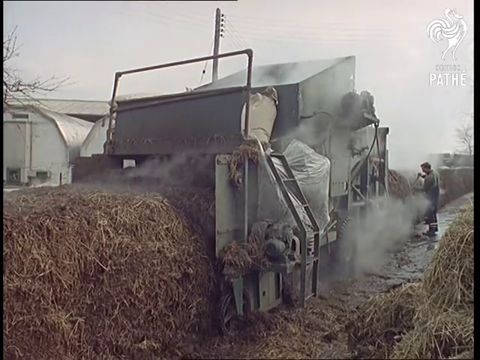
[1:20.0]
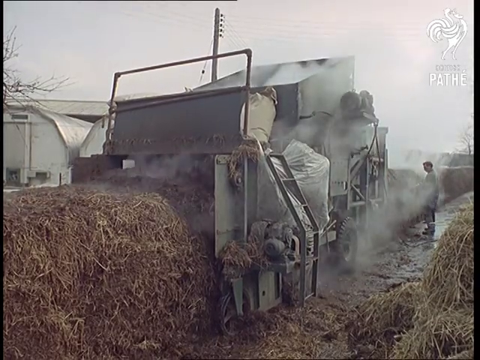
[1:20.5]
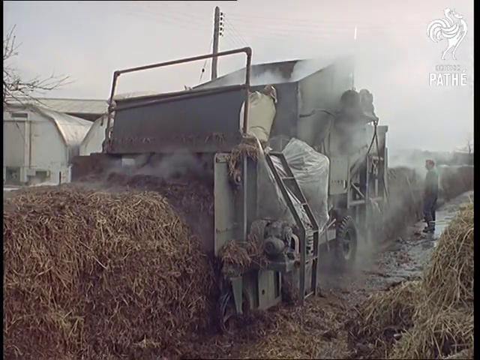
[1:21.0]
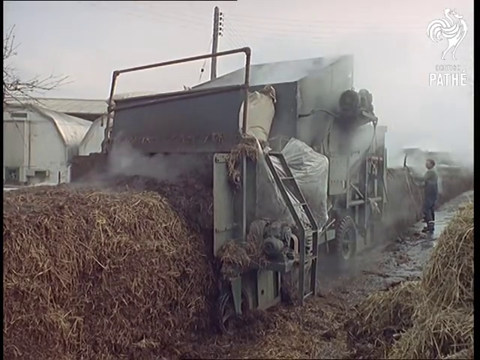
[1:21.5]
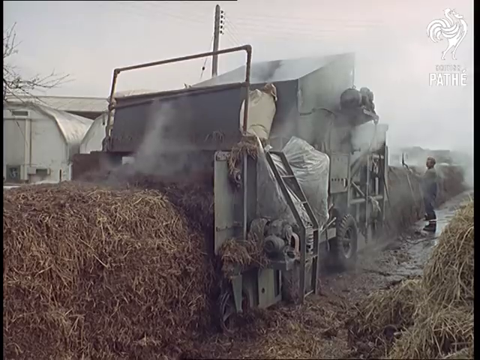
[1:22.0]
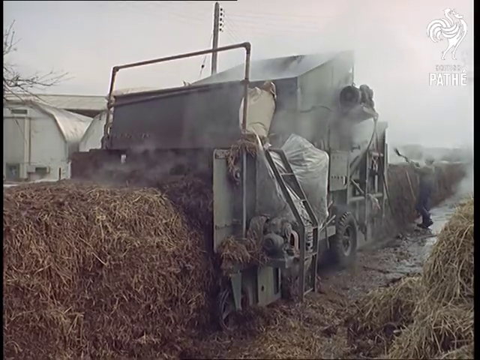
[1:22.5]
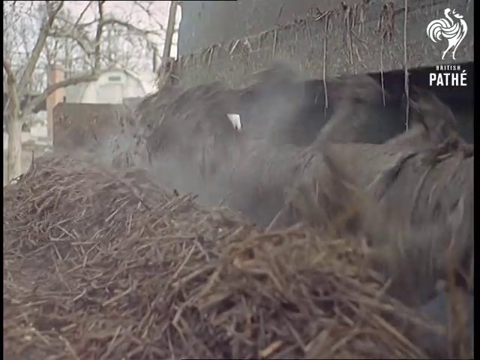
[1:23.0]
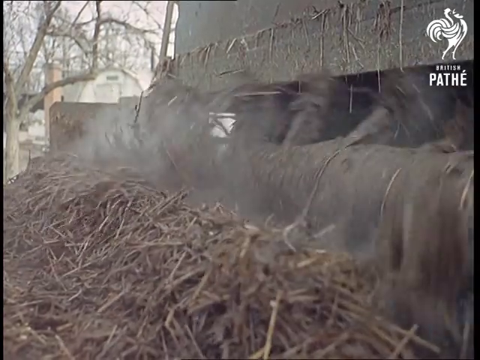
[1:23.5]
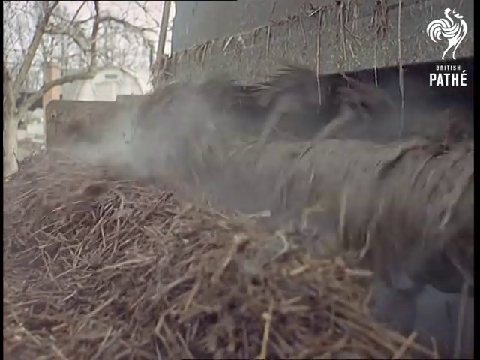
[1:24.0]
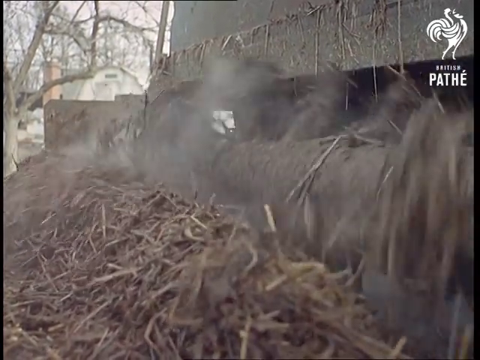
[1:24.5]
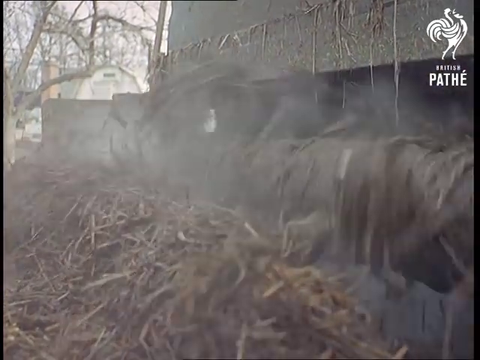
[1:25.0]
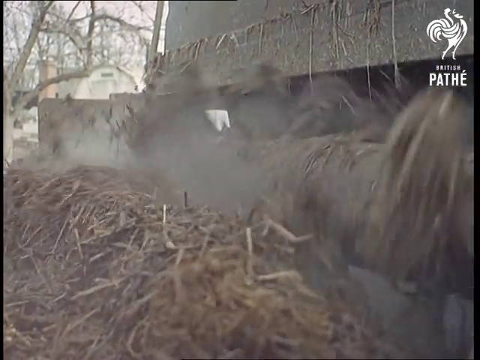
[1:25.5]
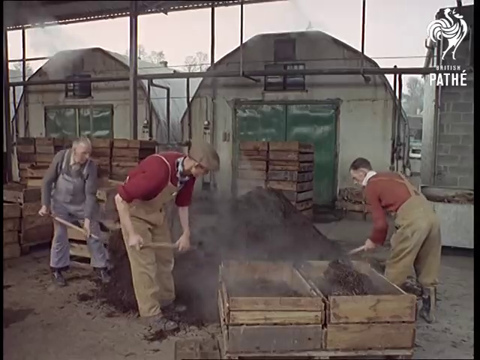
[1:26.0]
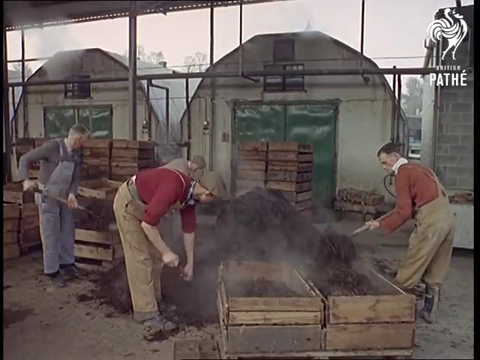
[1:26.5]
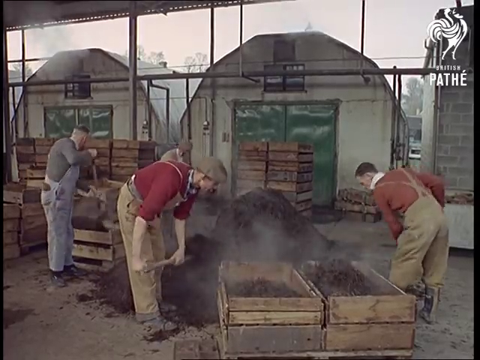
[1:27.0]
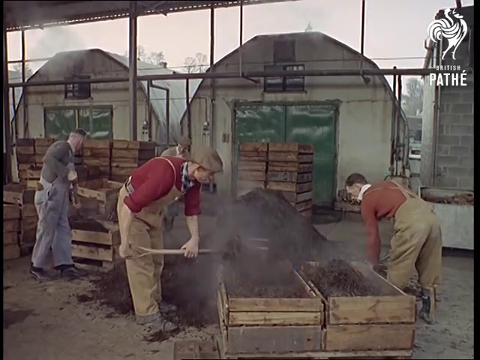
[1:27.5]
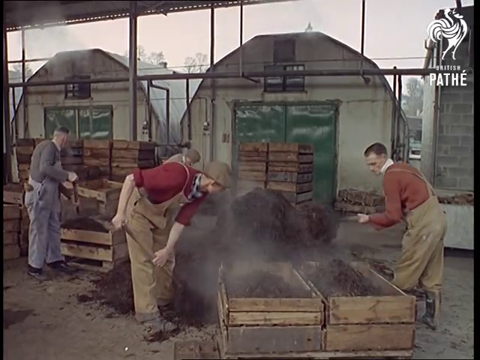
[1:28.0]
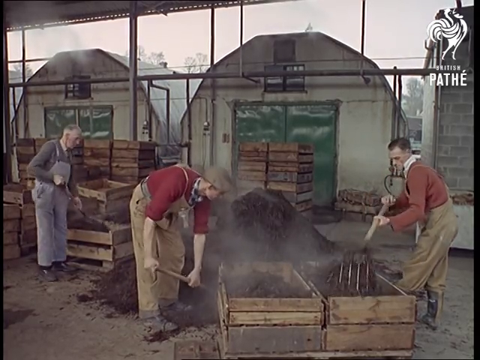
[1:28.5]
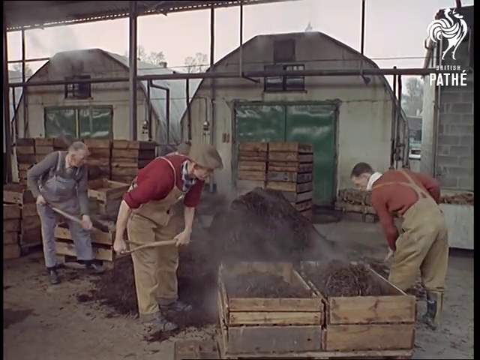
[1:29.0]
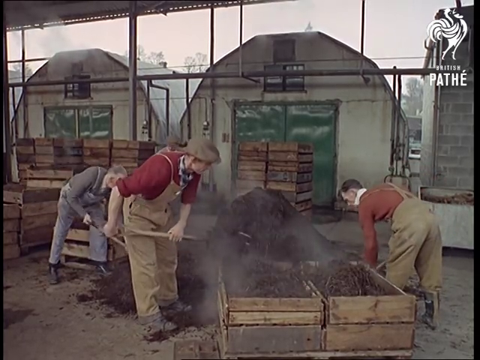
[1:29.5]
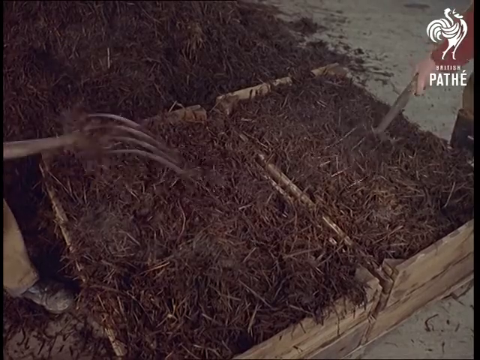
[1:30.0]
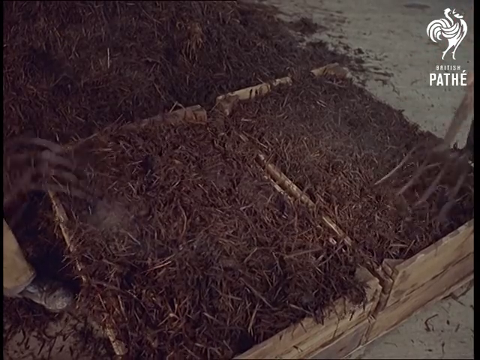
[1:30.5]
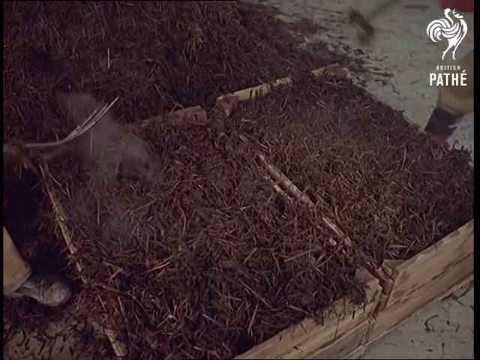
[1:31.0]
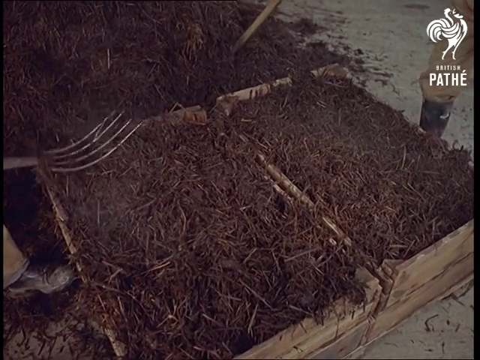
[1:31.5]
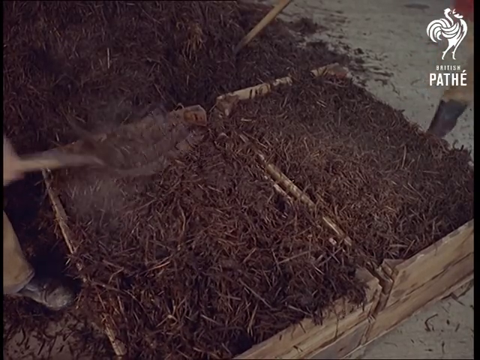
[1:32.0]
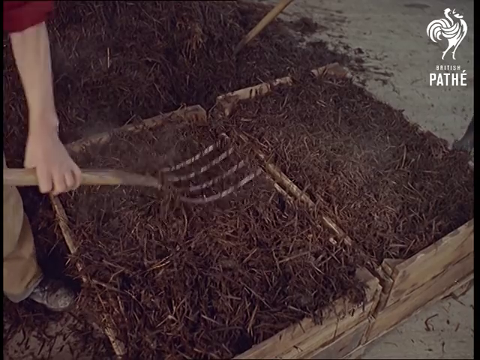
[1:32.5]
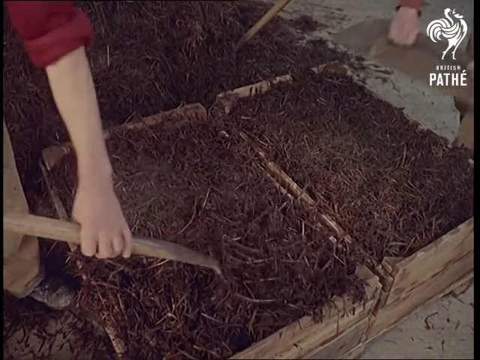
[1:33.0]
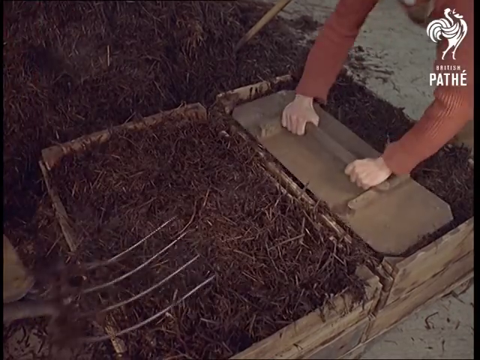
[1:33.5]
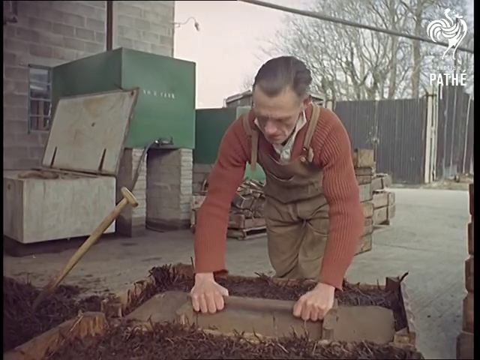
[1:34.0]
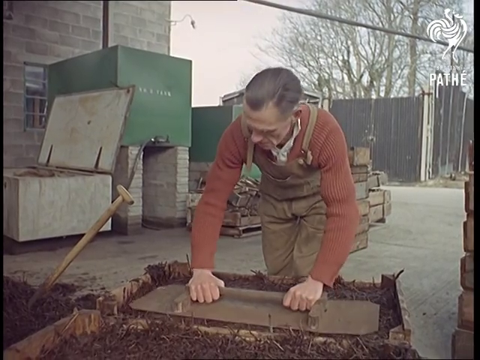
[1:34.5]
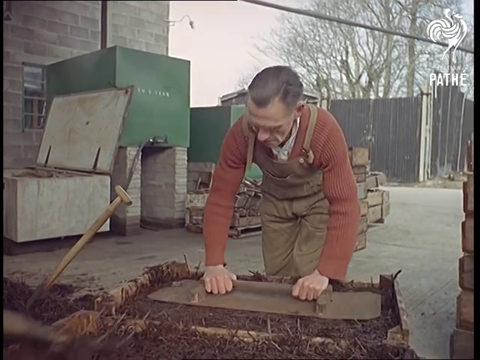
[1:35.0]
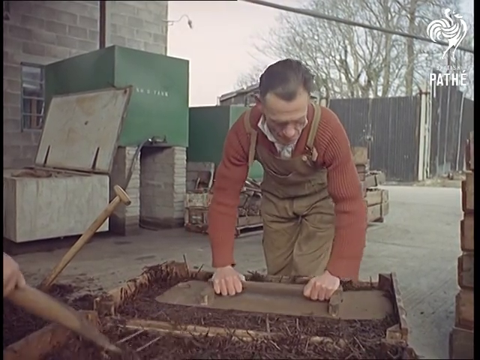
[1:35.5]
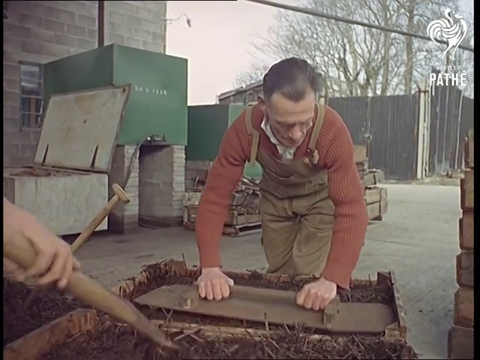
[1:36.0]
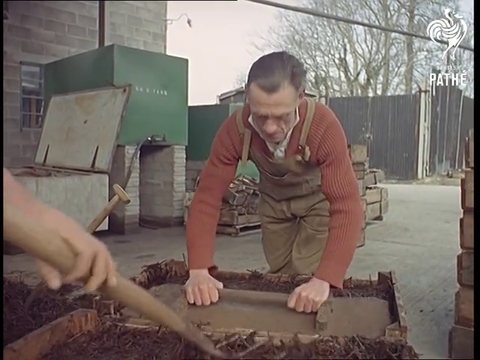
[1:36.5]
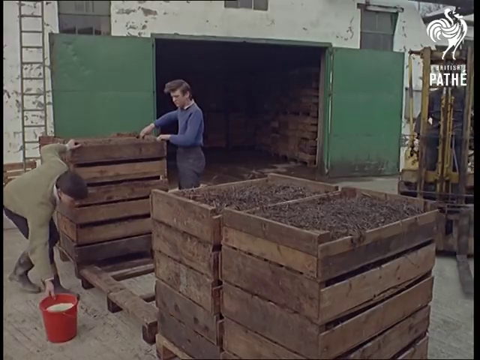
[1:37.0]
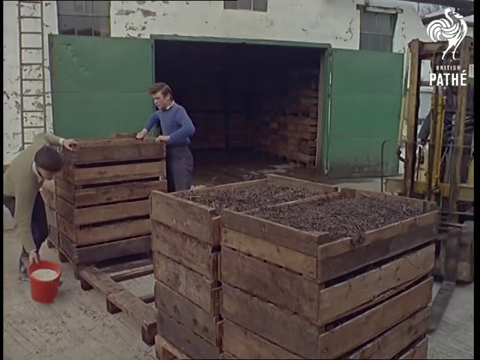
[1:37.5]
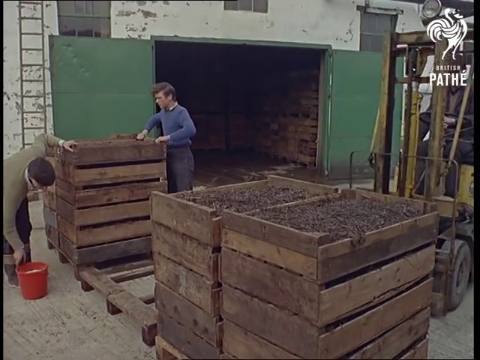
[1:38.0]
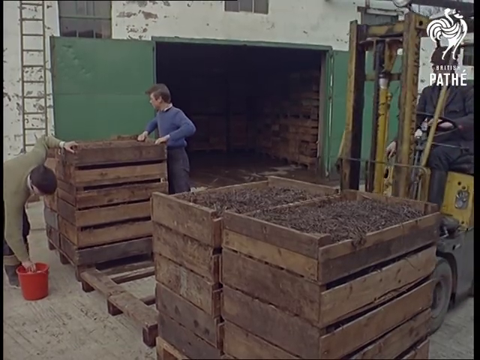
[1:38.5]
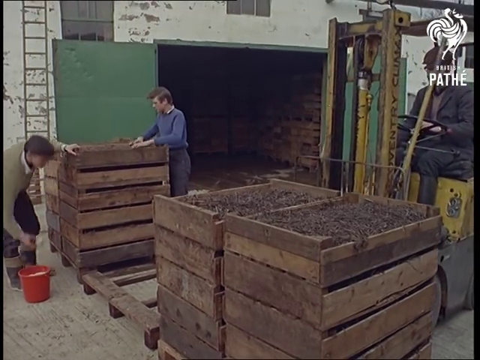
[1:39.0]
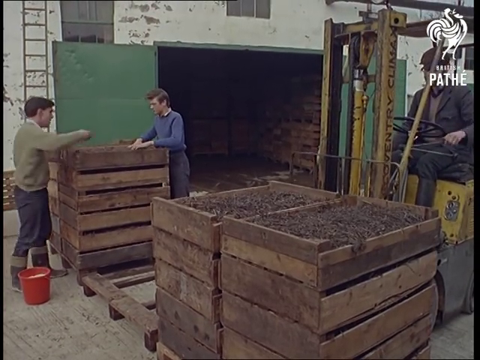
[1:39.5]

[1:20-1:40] Men bale hay with a large gray machine. Then four men appear: two wear red shirts and overalls, and two wear shirts of a different color. The soil and hay are watered and packed into the gray machine, which apparently packs them tightly; the material is then ground up, scooped by shovel into the small pallets where the mushrooms are grown, and packed down tightly into the pallets. A forklift comes and picks up a pallet. The day is gray, with a gray sky and no leaves on the trees, and there are outbuildings that are work buildings rather than greenhouses. It looks like a plant with the whole setup.